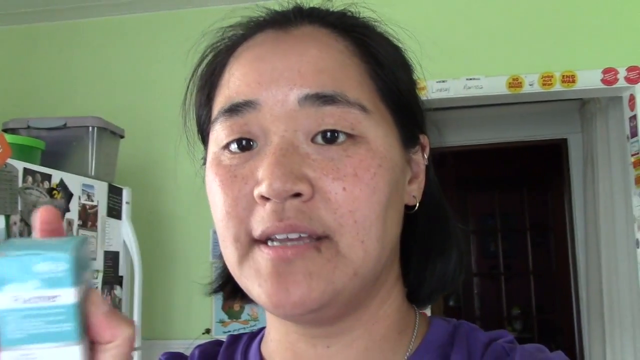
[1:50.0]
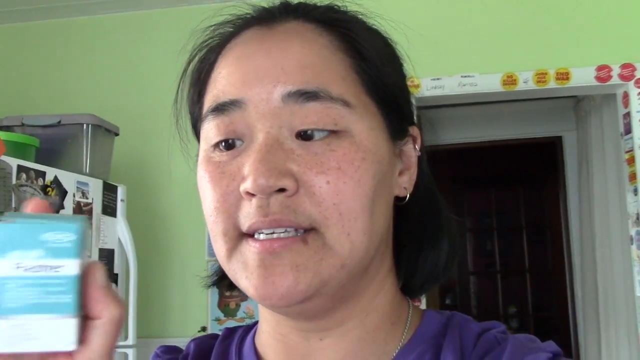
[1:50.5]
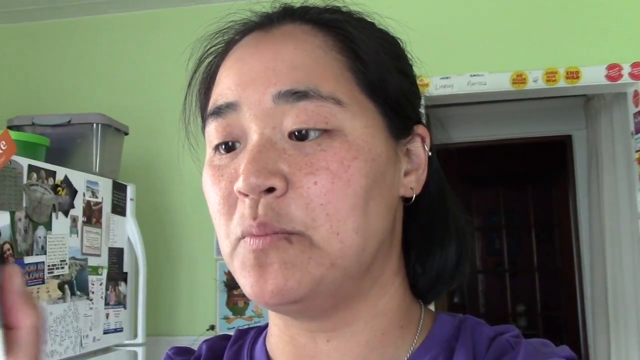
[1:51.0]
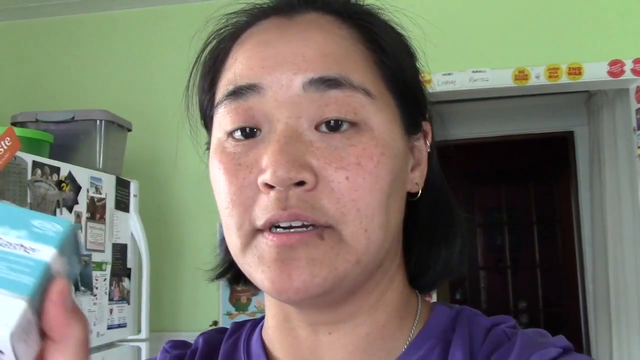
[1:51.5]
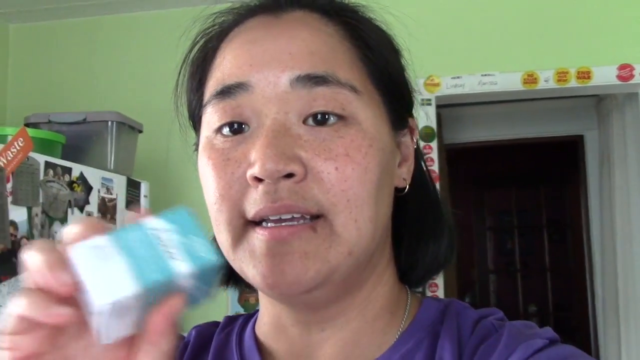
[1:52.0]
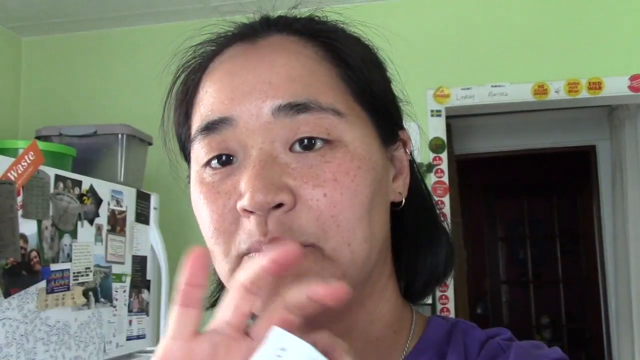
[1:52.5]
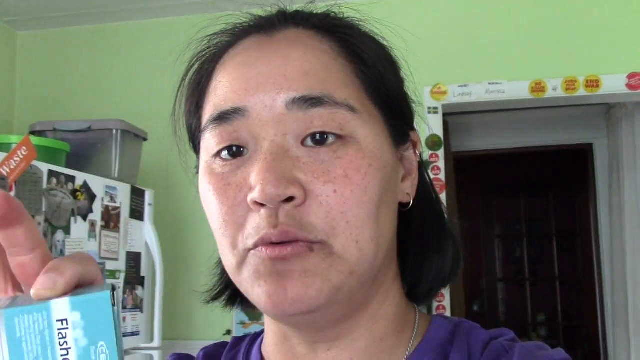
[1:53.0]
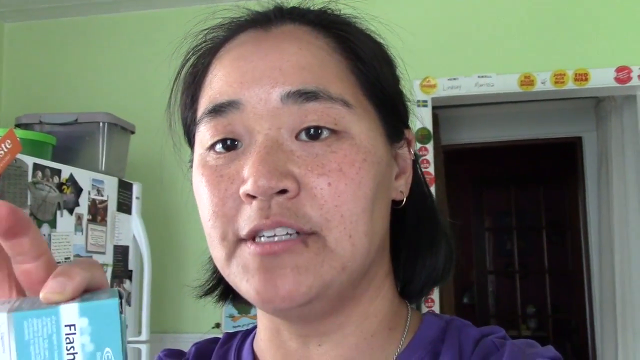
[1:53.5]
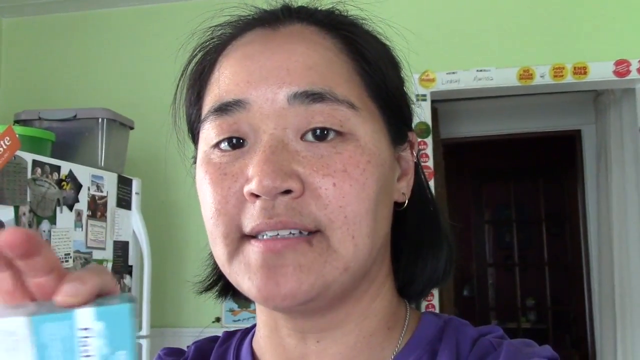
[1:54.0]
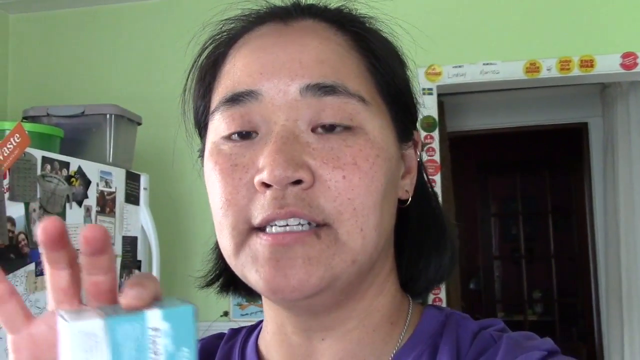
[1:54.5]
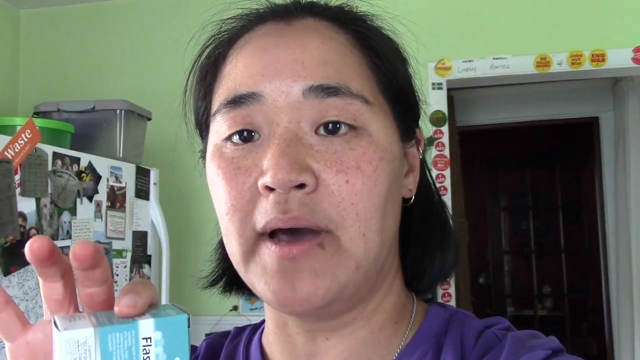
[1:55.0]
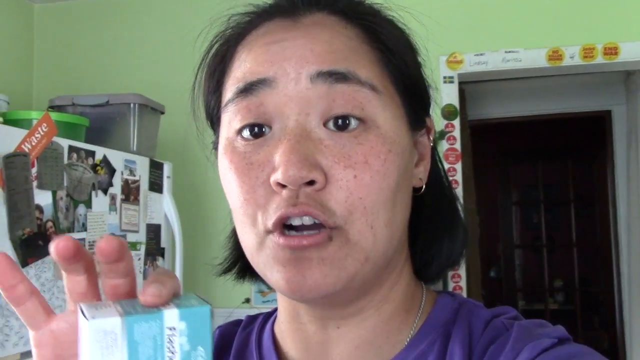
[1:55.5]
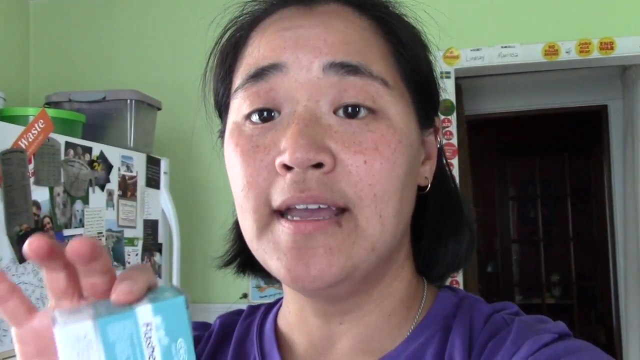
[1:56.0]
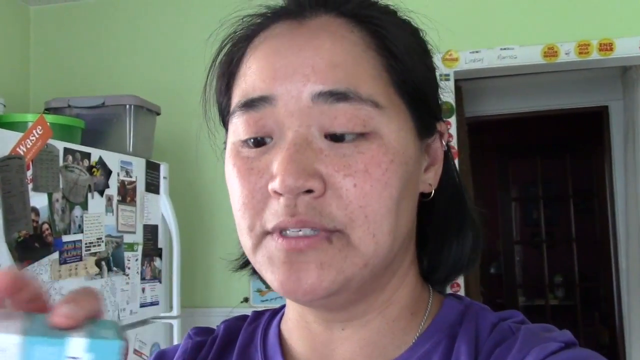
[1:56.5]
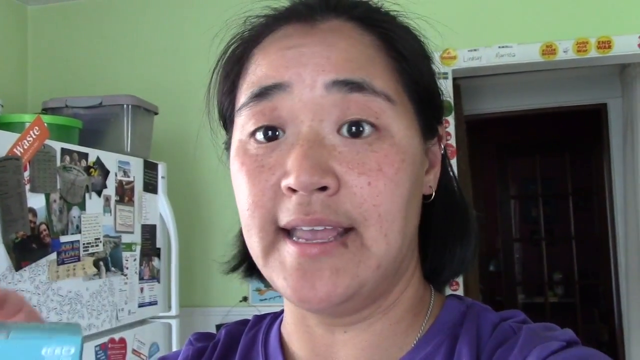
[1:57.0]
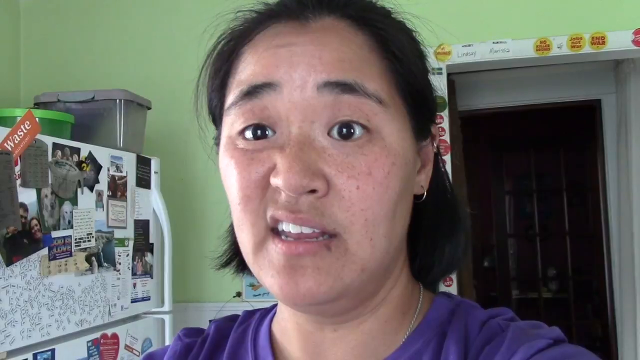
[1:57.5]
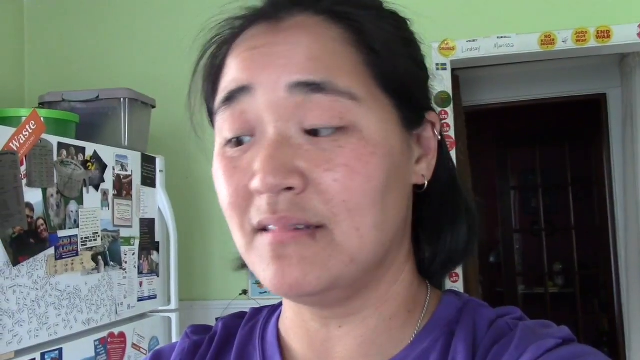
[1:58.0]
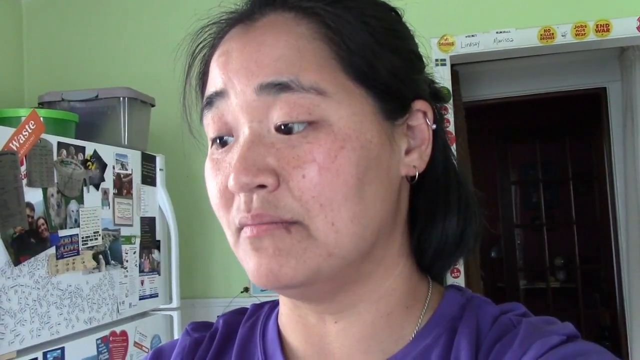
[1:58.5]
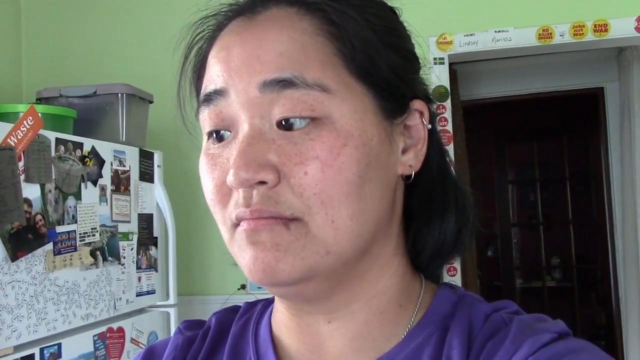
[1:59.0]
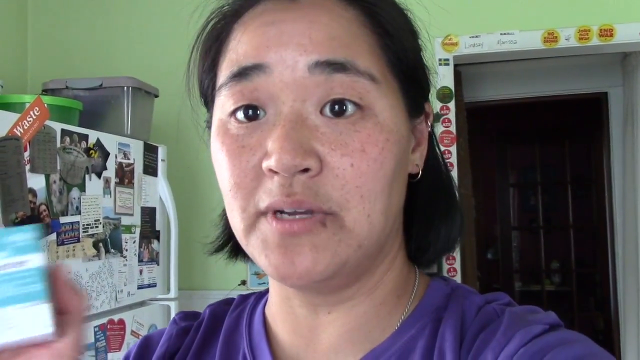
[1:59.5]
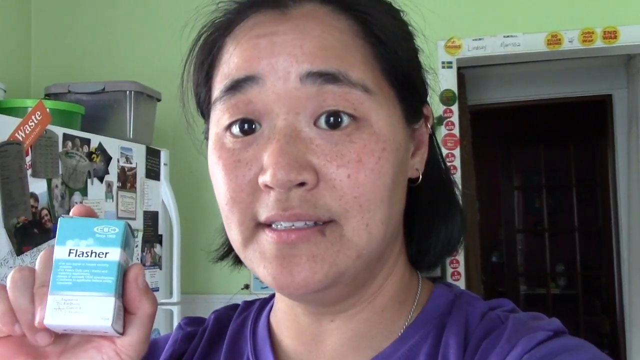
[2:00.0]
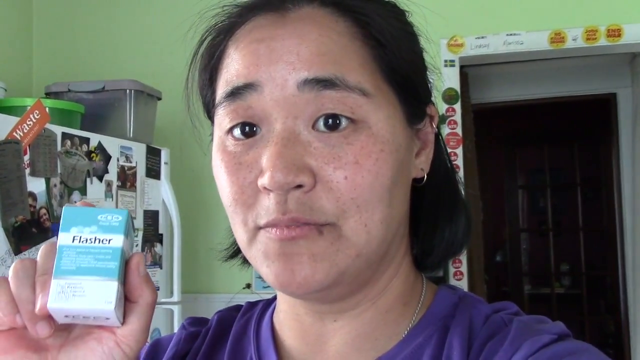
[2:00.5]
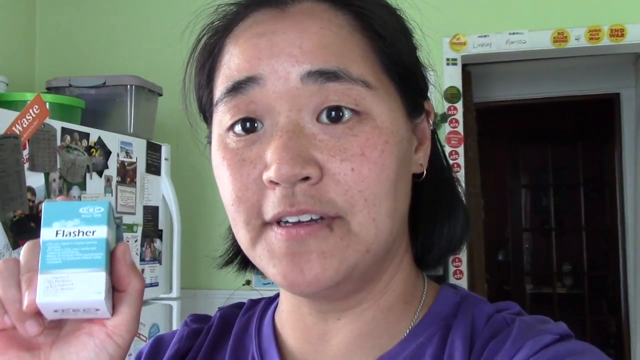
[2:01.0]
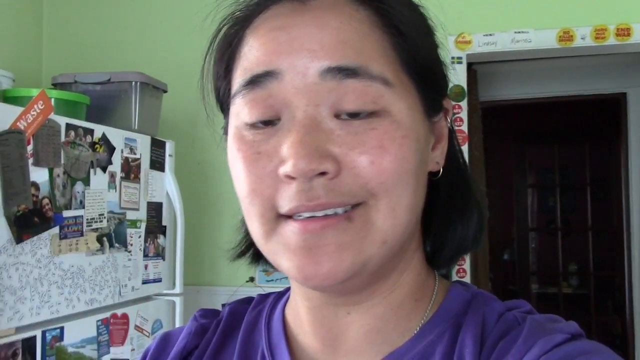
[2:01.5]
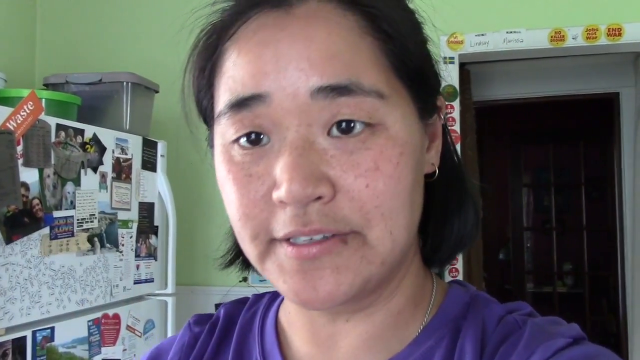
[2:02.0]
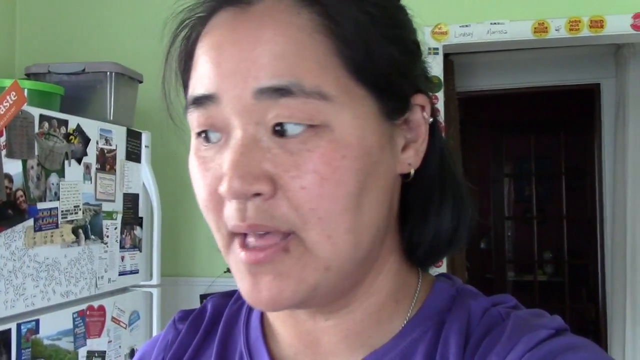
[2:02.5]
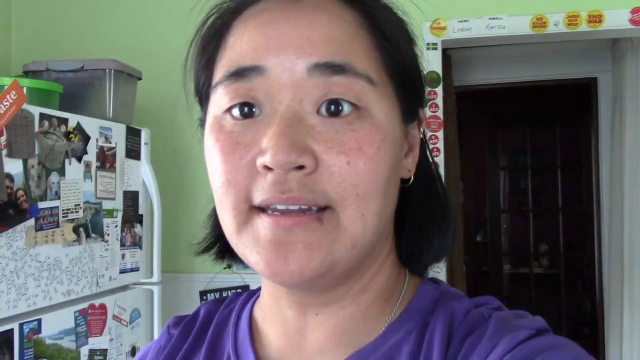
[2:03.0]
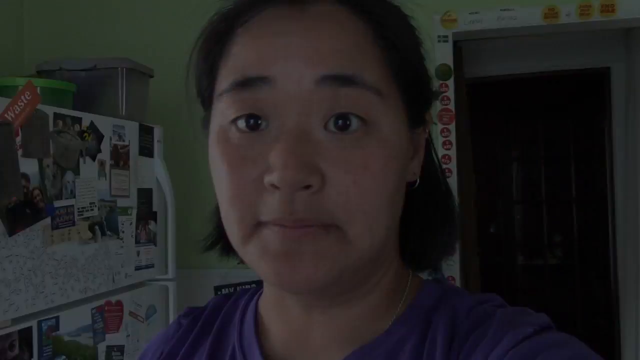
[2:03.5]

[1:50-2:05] The woman continues talking about the product in the box, and her body language suggests she considers it a good product. The video then fades to black and ends.